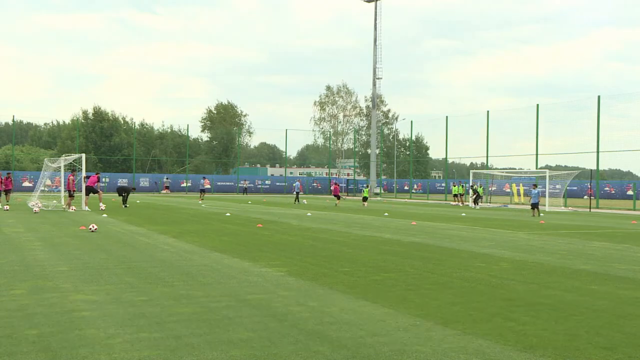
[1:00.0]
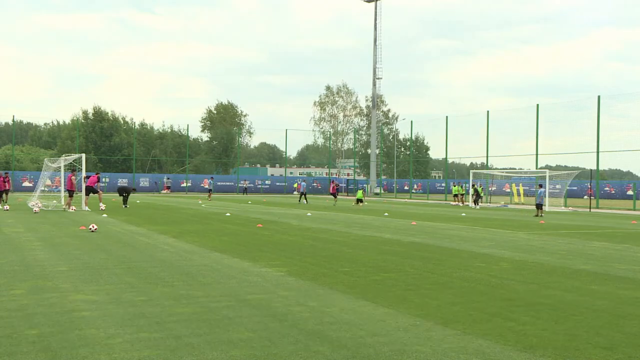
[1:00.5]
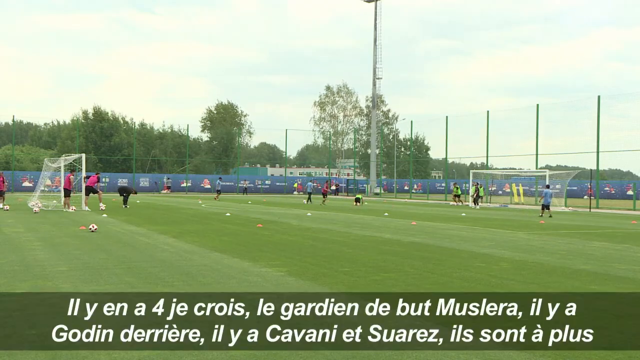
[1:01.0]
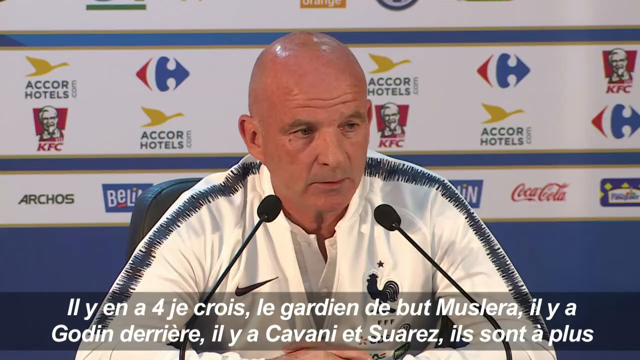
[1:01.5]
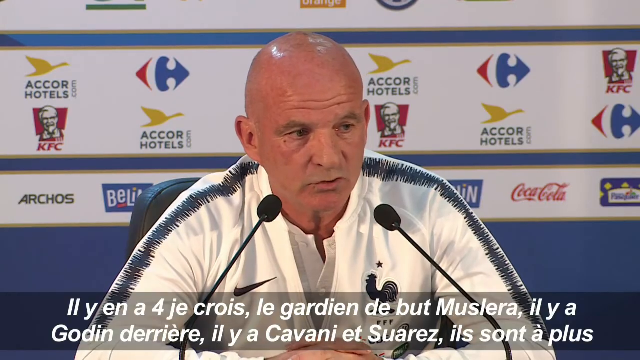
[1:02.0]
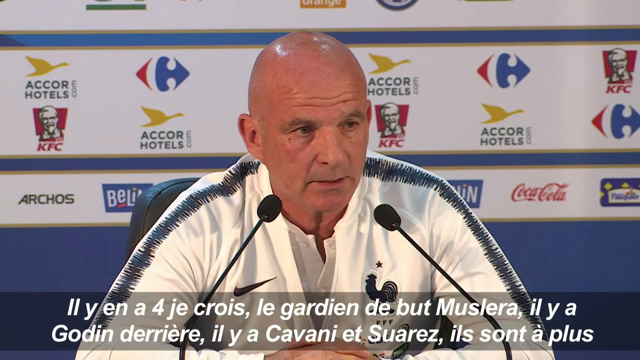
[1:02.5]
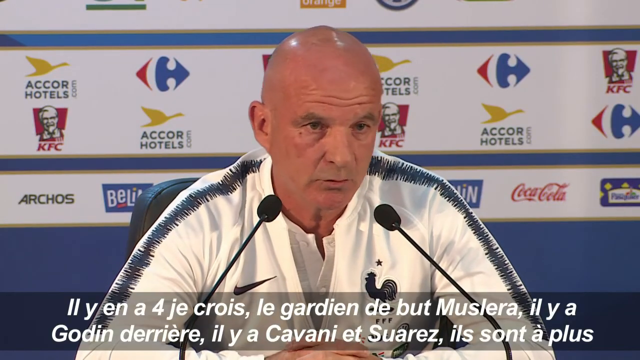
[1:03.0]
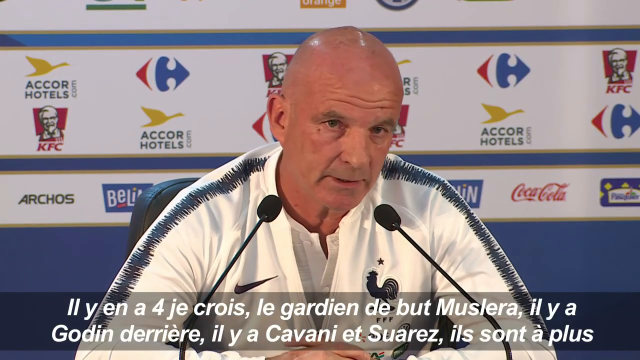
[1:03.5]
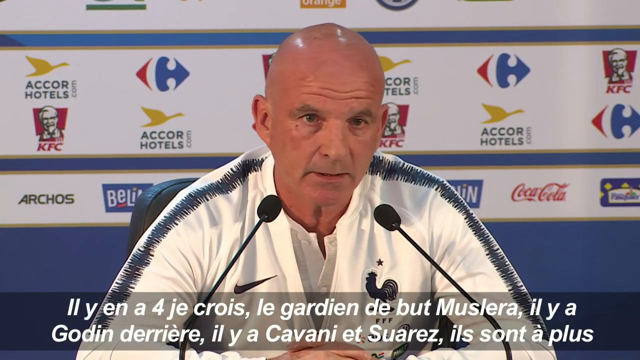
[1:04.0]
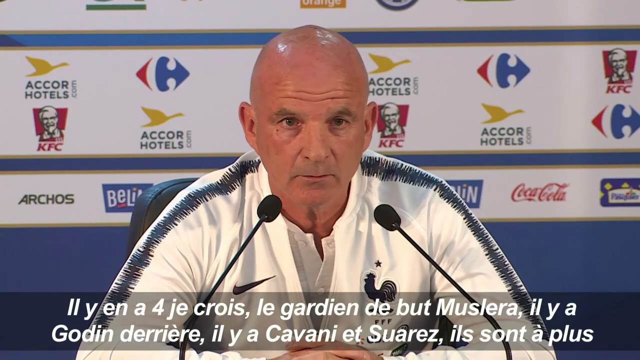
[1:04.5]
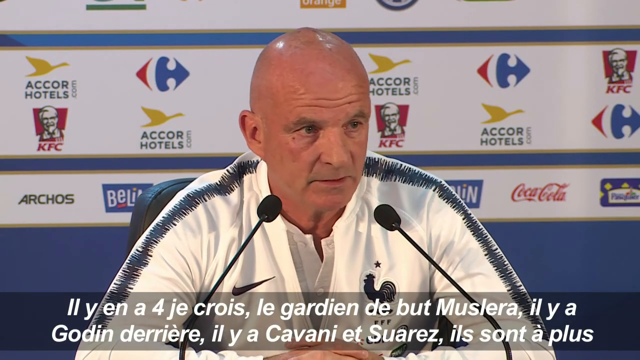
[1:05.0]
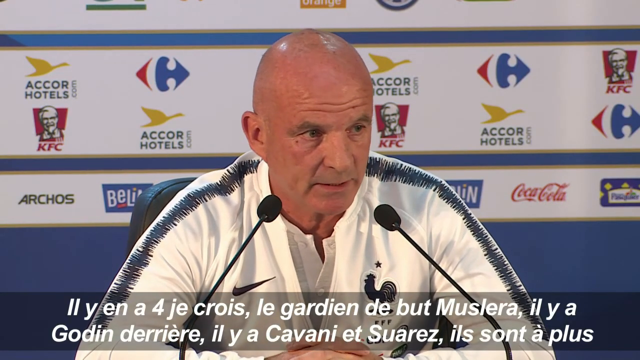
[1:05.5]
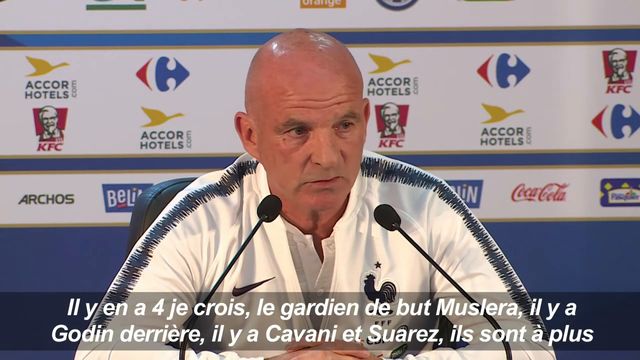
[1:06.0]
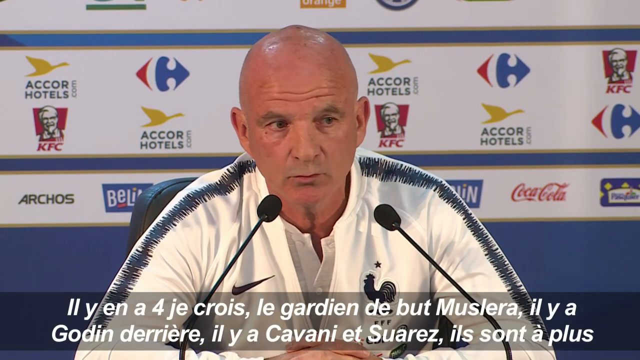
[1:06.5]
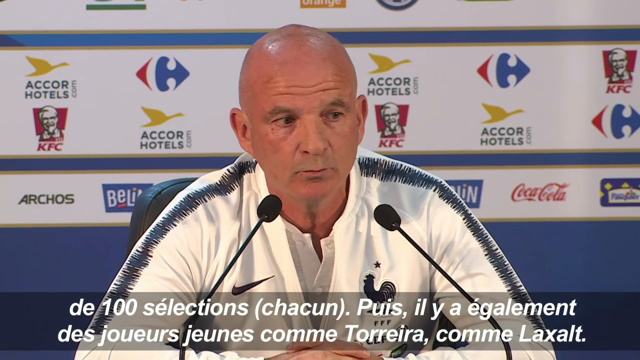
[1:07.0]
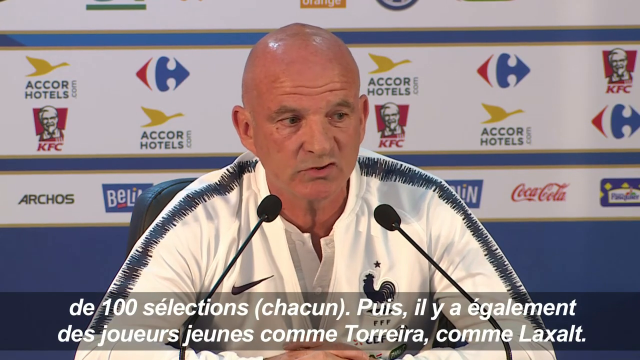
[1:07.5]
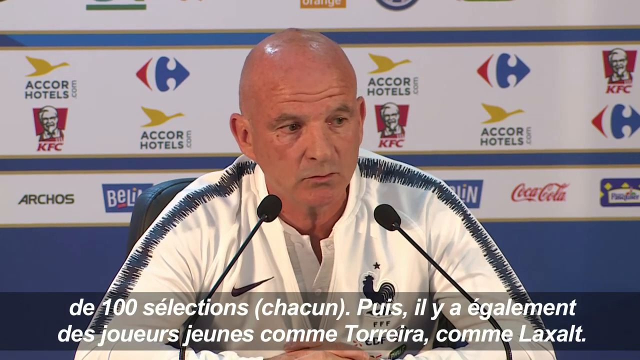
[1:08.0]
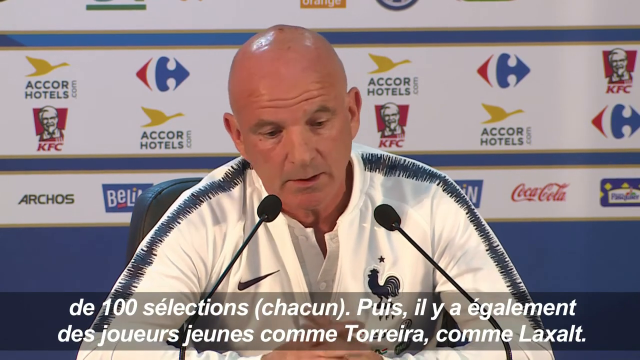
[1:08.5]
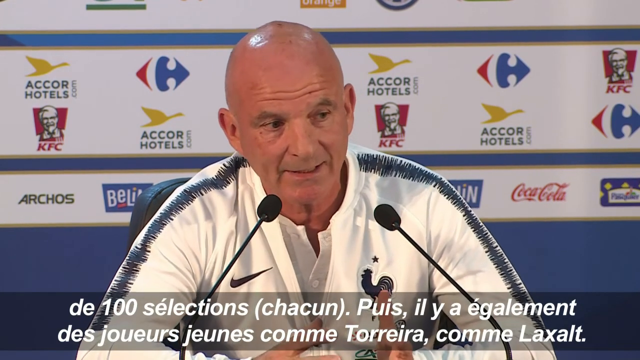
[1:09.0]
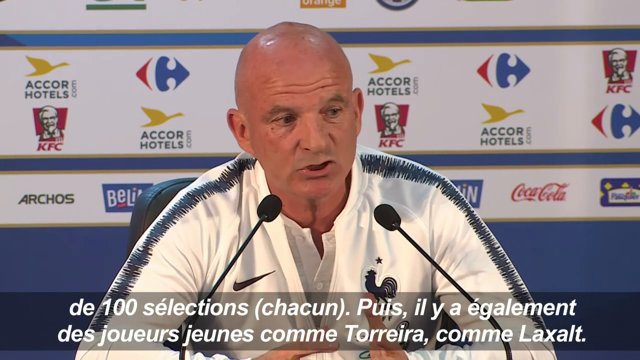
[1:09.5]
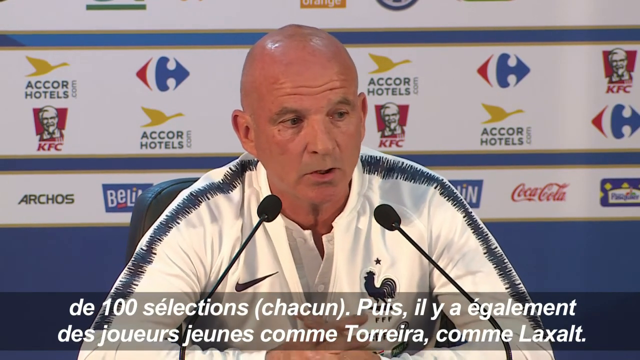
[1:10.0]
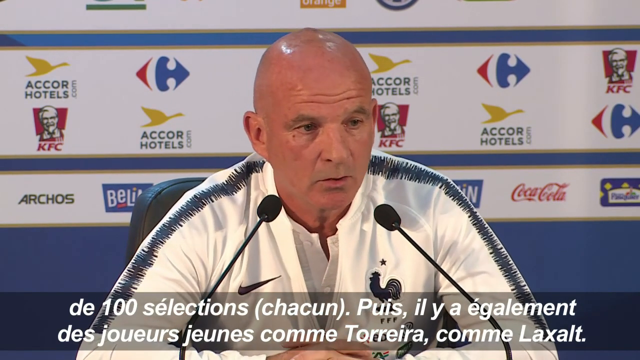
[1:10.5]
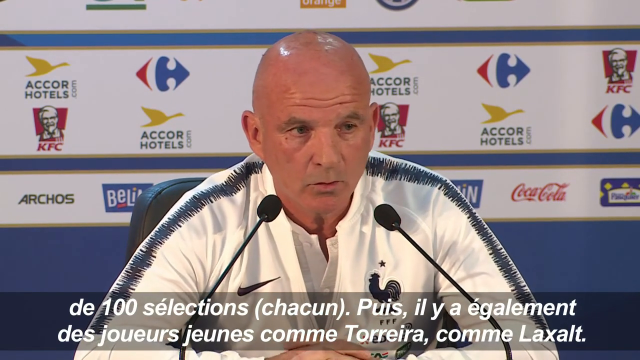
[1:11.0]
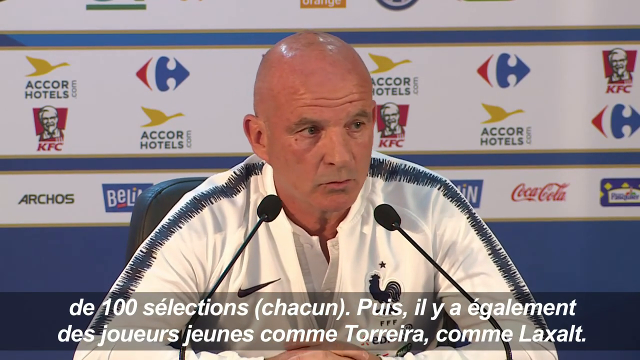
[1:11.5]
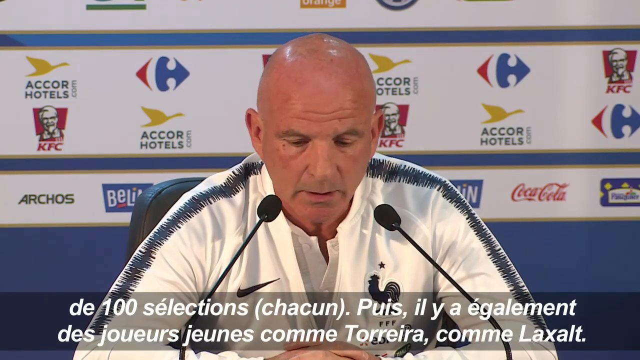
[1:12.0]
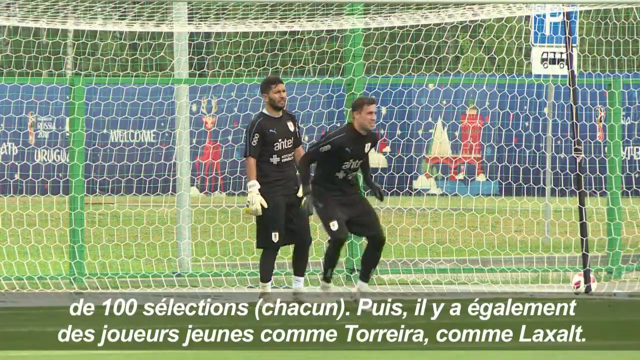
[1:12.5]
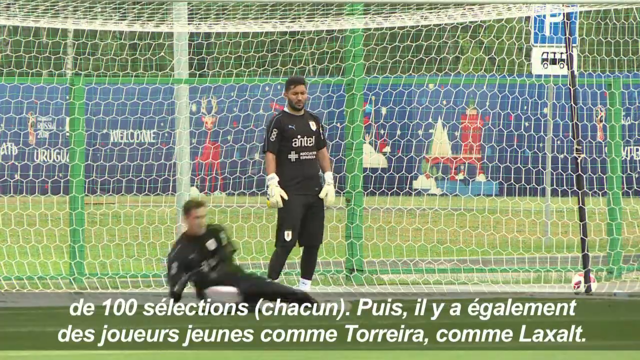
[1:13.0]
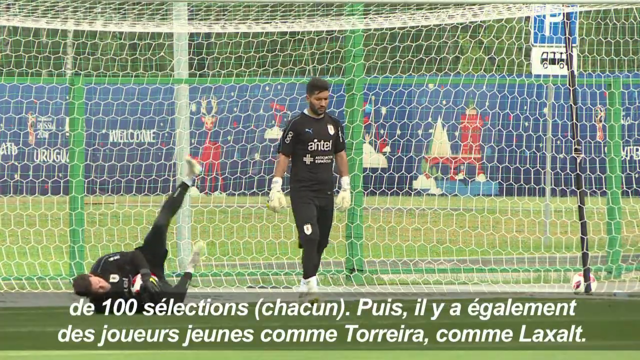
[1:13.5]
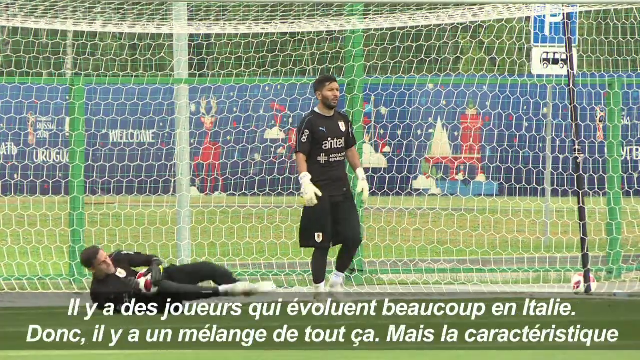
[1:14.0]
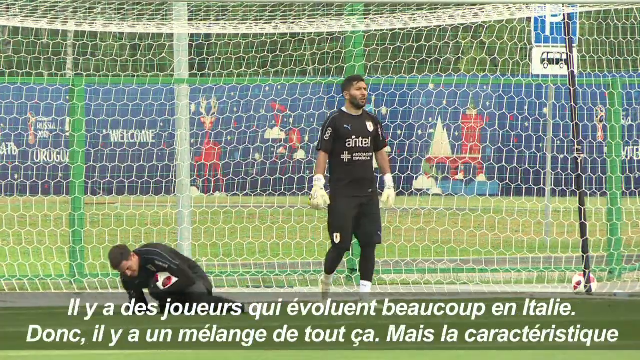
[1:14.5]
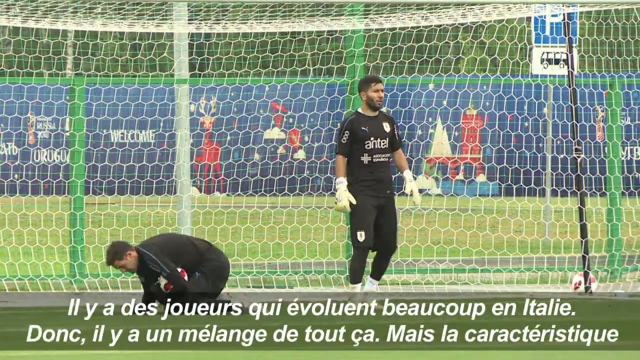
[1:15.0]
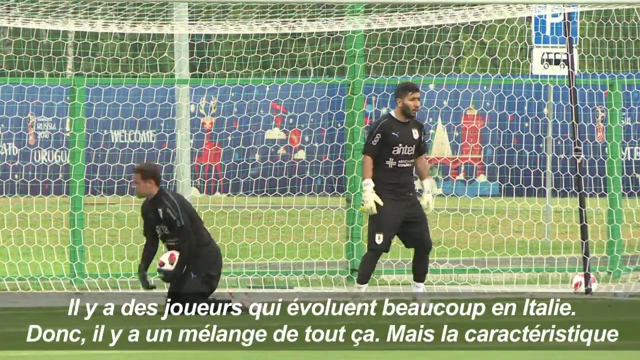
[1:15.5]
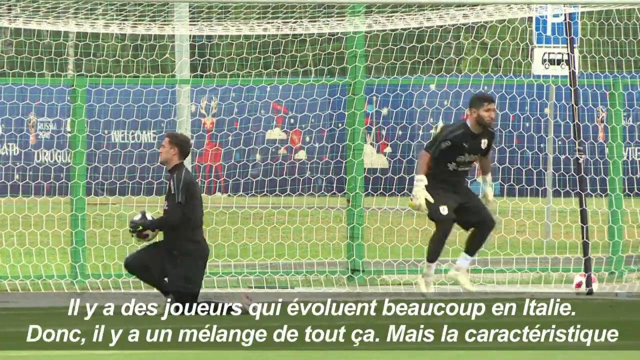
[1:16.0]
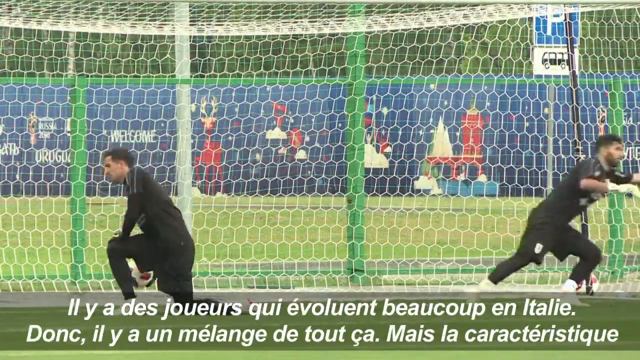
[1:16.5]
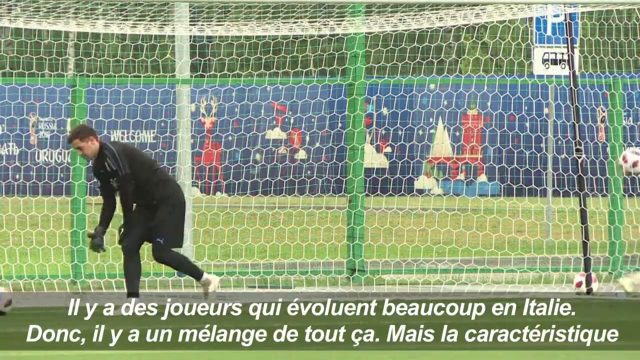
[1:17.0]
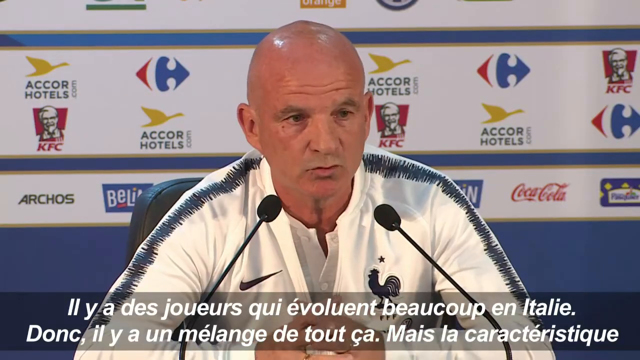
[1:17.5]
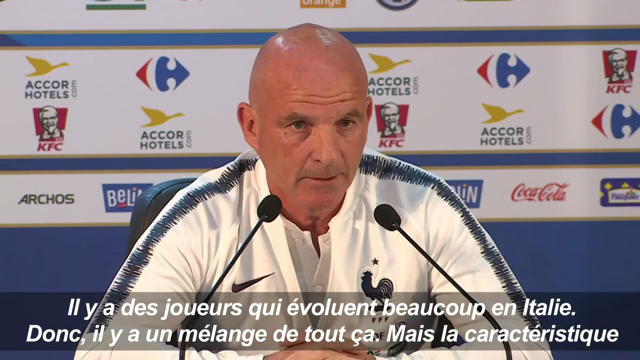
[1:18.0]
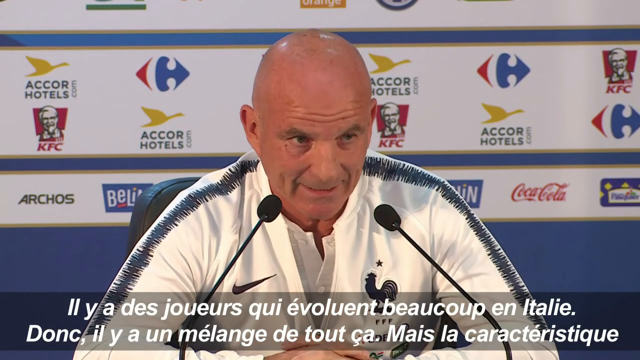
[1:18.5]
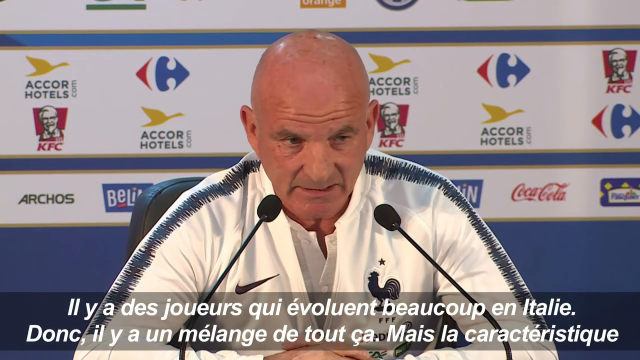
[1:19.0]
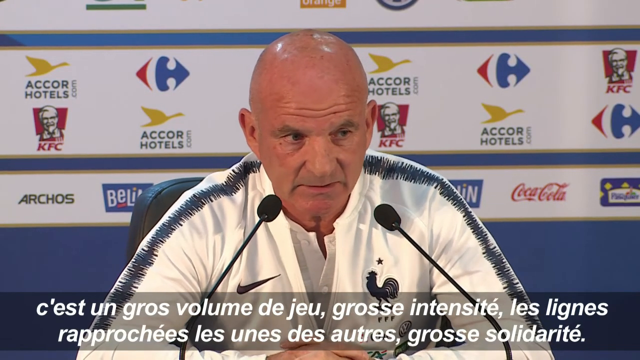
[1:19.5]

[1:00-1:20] The wide shot of the training pitch cuts to head-and-shoulders footage of the bald man speaking at the press conference, now looking slightly more to the right as he talks, seen from slightly above. Another shot of the training pitch is close in on two men standing inside the goal, both dressed in black as keepers, with no tabards and wearing gloves. The man in front, who is white, falls down to his left to catch an incoming ball, and the man behind, who looks more Arabic, moves up to the front of the goal. He jumps up and down before leaping off to the right, but the ball seemingly goes past him into the netting. The video cuts back to the static head-and-shoulders shot of the bald man speaking.